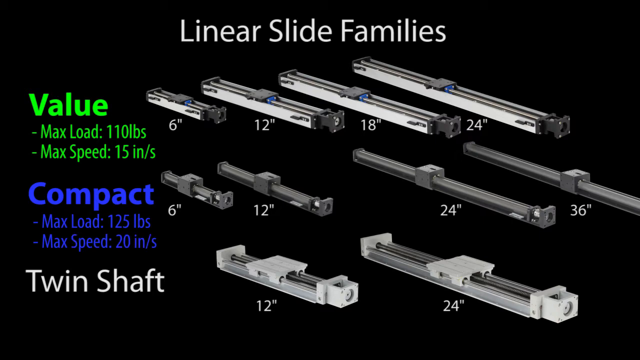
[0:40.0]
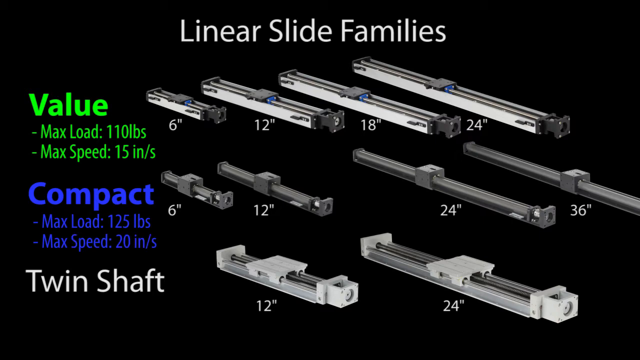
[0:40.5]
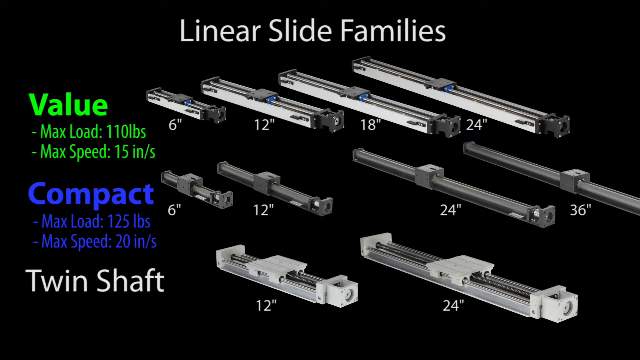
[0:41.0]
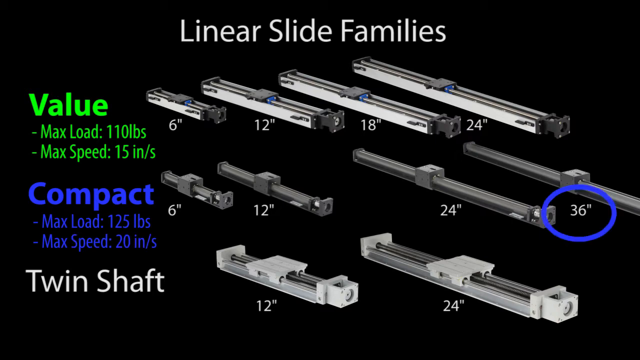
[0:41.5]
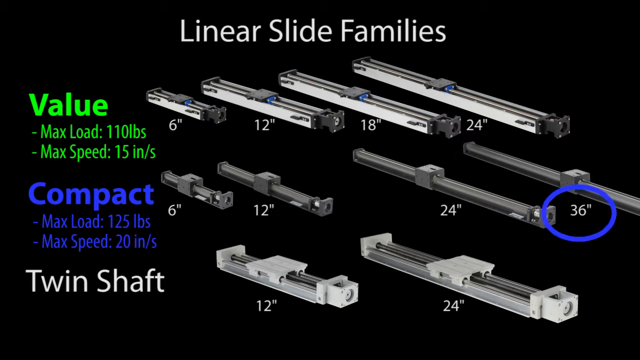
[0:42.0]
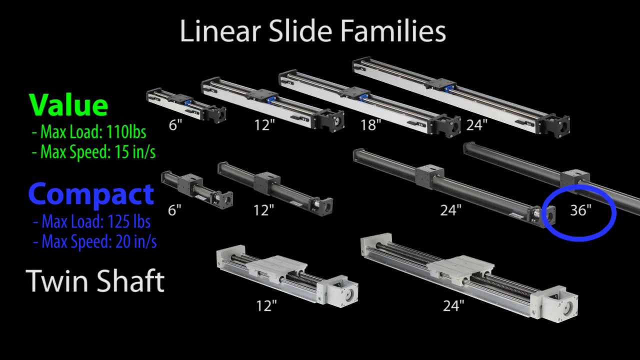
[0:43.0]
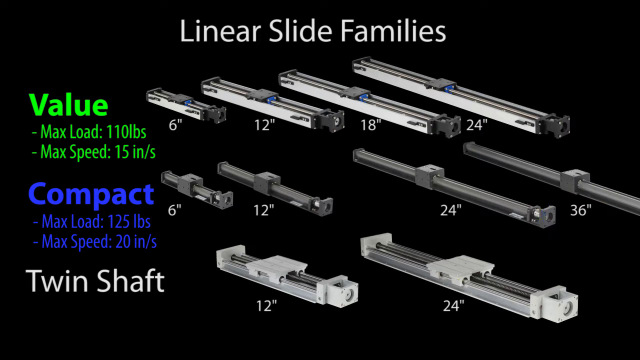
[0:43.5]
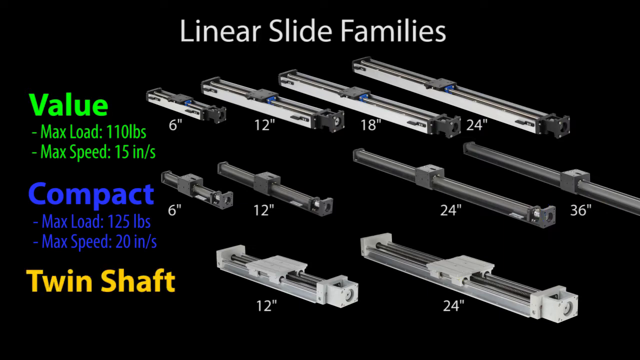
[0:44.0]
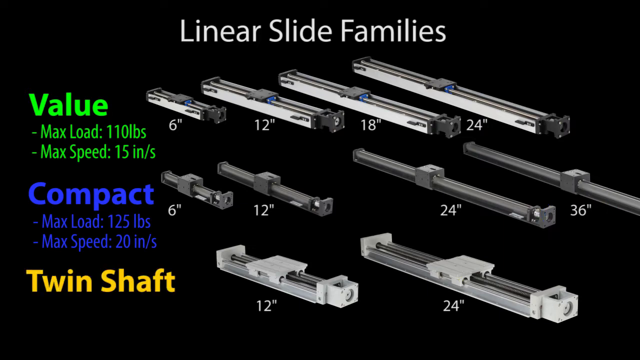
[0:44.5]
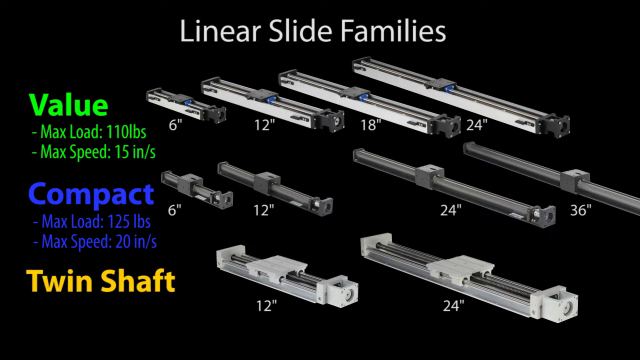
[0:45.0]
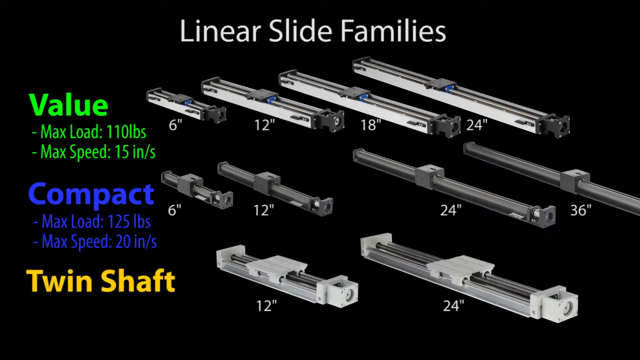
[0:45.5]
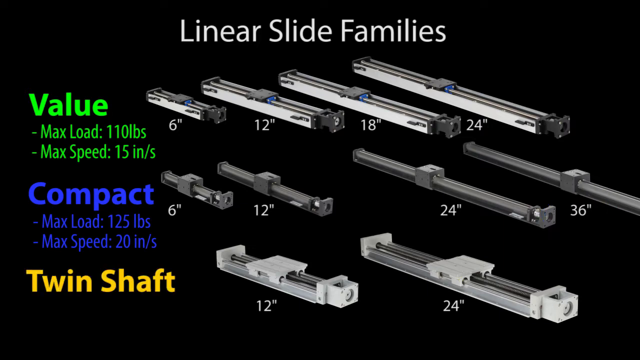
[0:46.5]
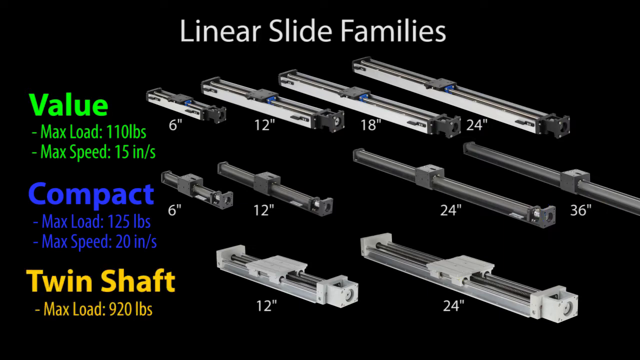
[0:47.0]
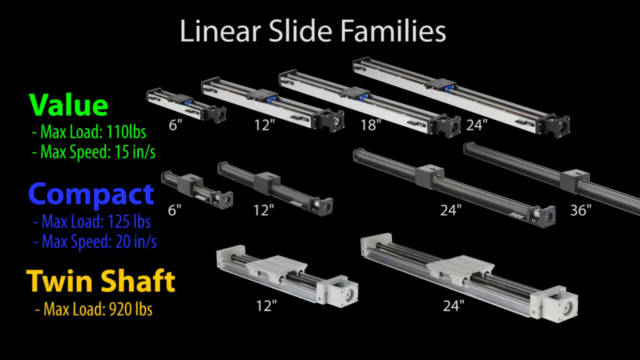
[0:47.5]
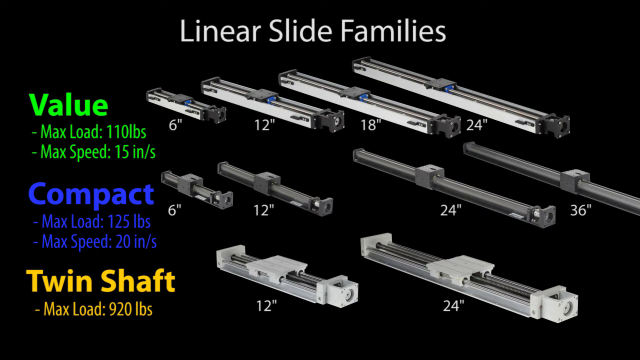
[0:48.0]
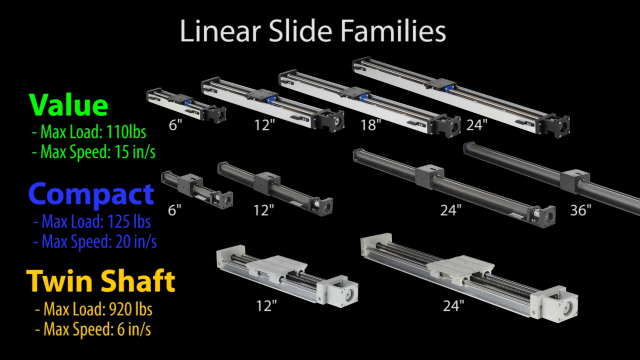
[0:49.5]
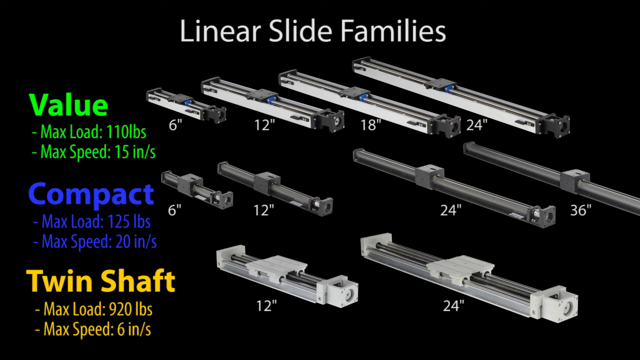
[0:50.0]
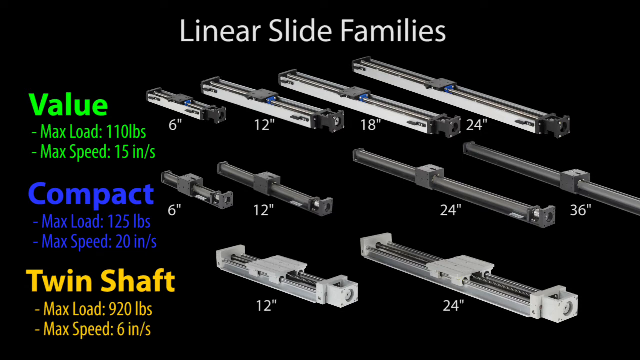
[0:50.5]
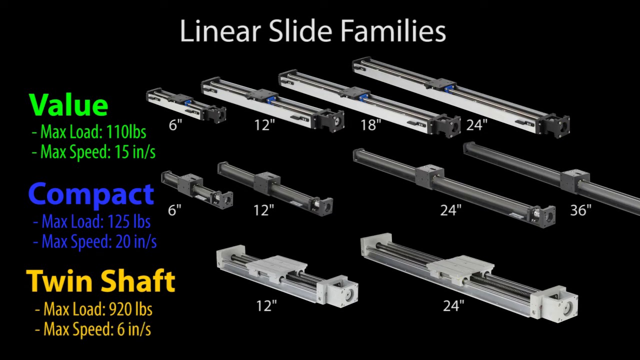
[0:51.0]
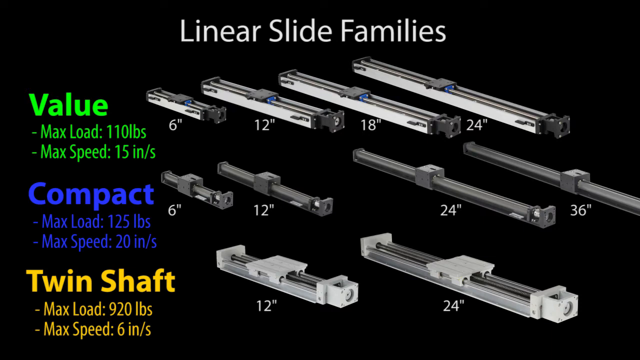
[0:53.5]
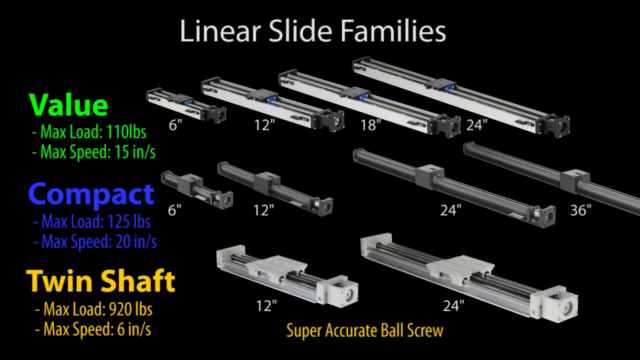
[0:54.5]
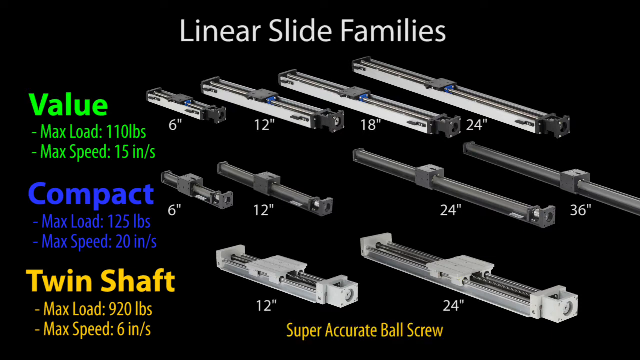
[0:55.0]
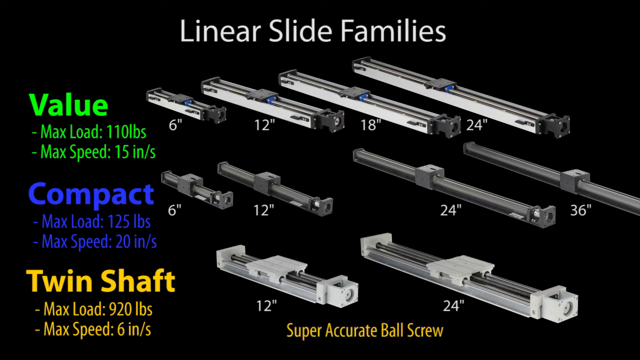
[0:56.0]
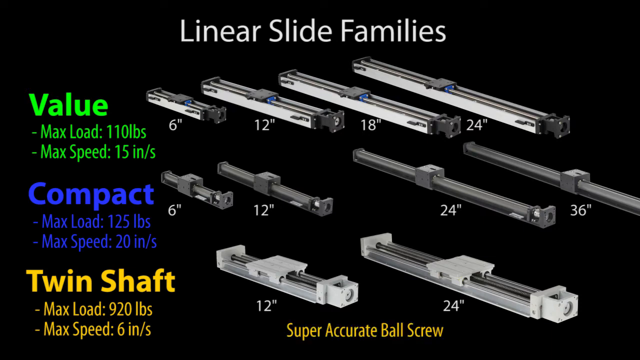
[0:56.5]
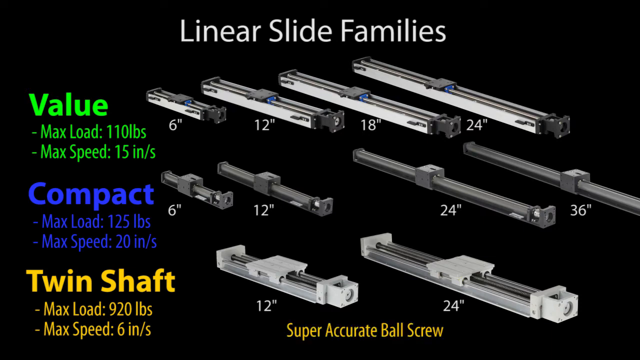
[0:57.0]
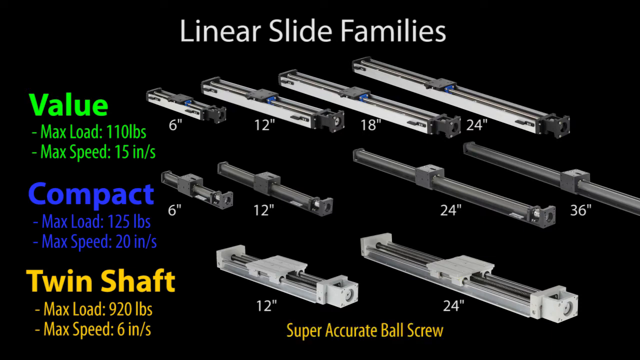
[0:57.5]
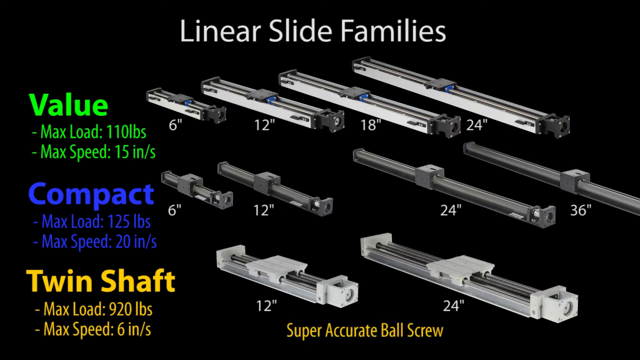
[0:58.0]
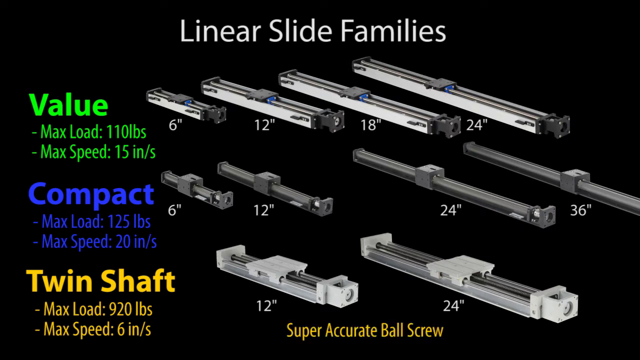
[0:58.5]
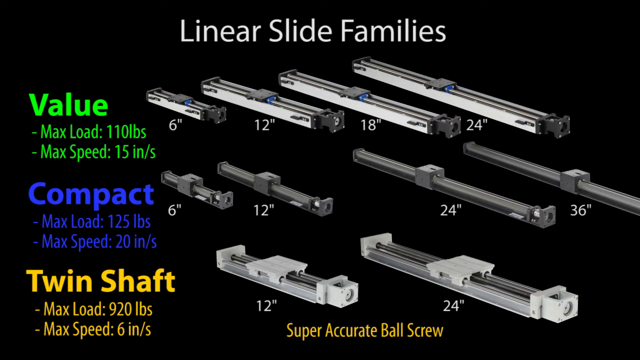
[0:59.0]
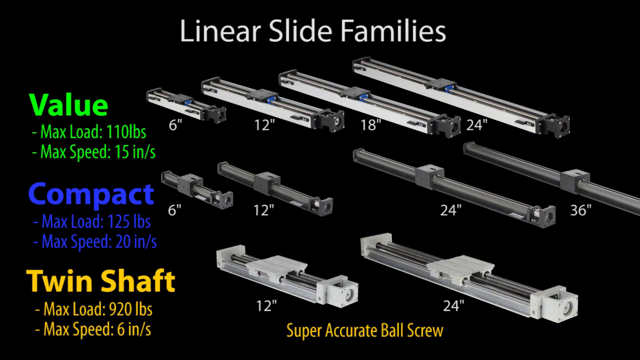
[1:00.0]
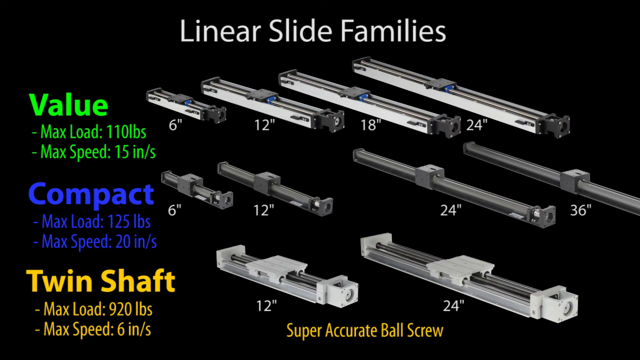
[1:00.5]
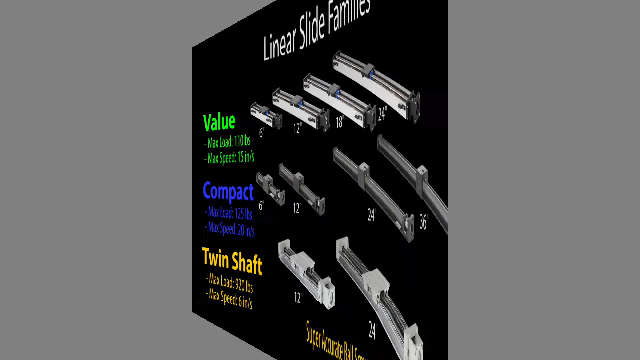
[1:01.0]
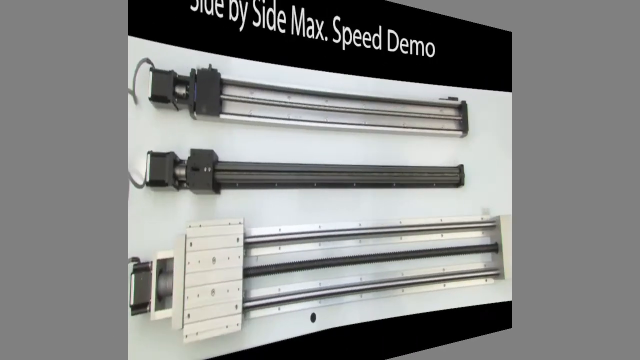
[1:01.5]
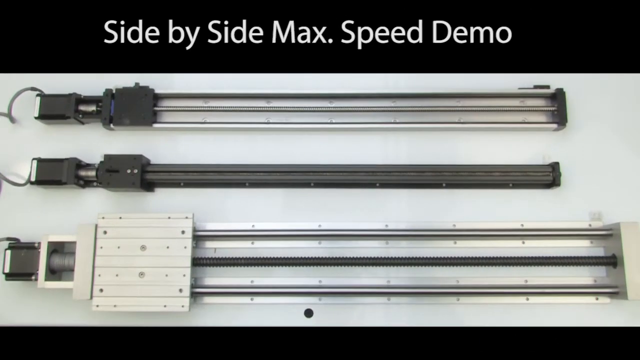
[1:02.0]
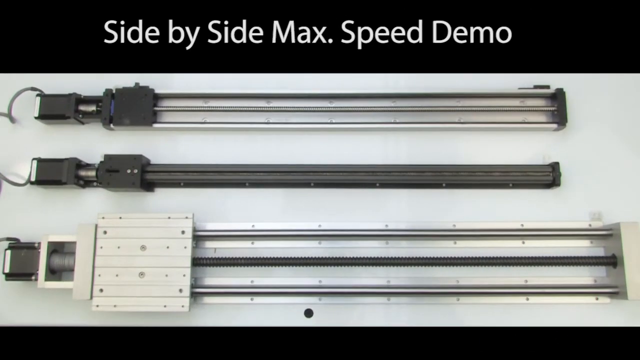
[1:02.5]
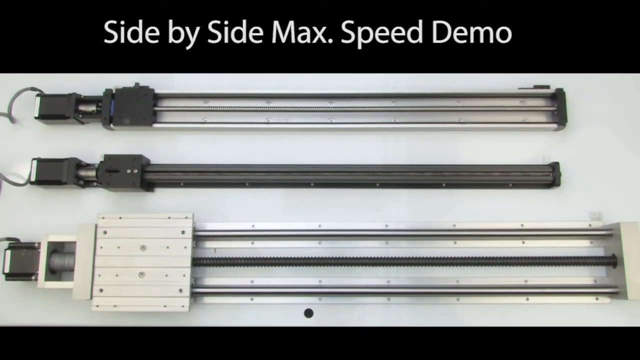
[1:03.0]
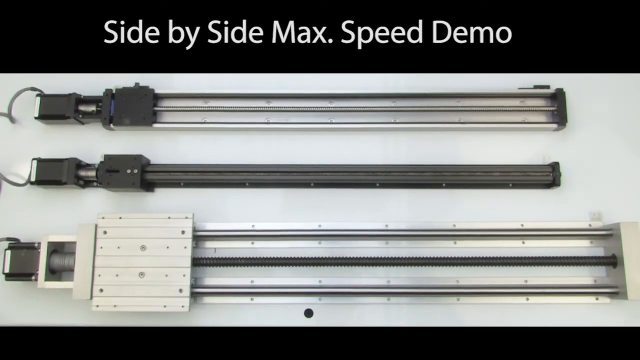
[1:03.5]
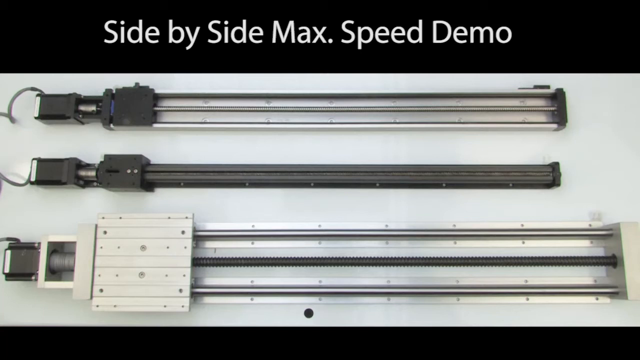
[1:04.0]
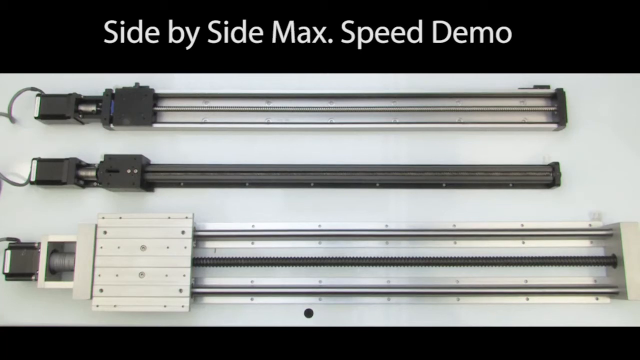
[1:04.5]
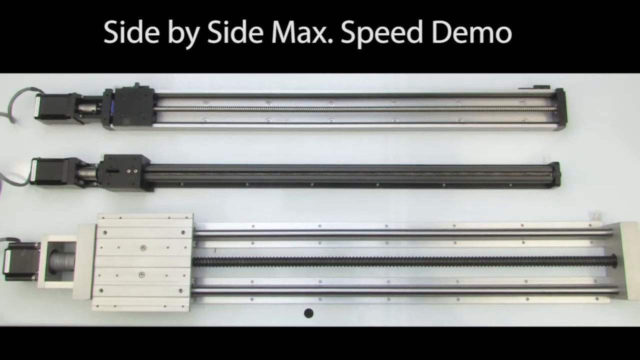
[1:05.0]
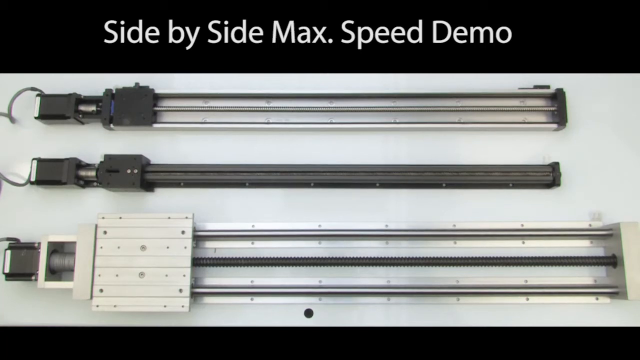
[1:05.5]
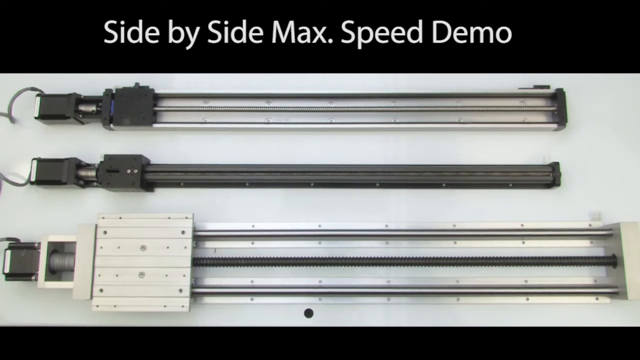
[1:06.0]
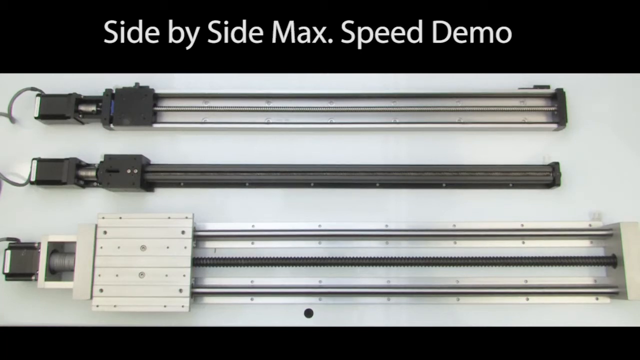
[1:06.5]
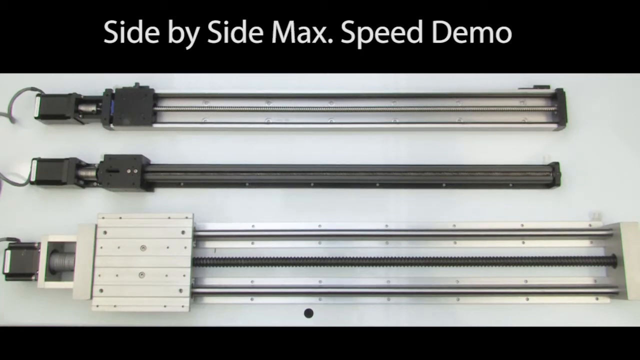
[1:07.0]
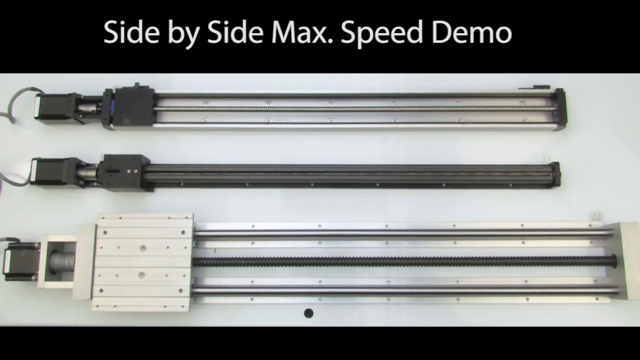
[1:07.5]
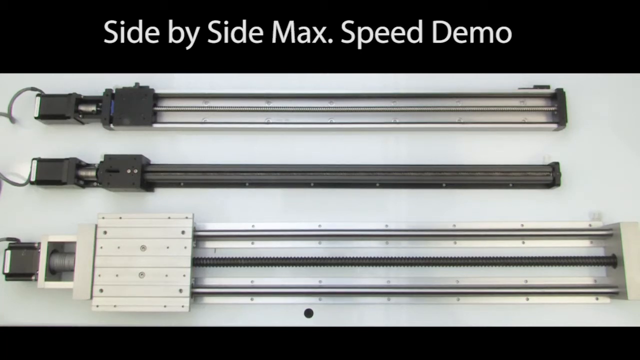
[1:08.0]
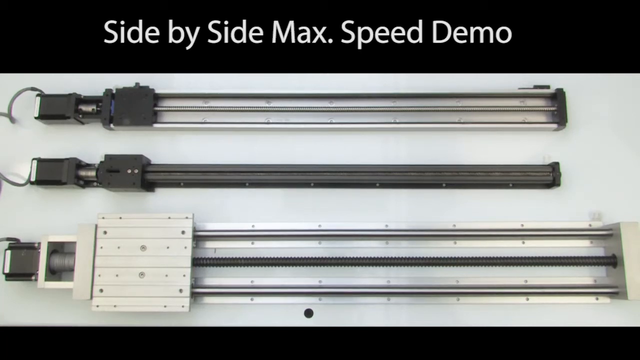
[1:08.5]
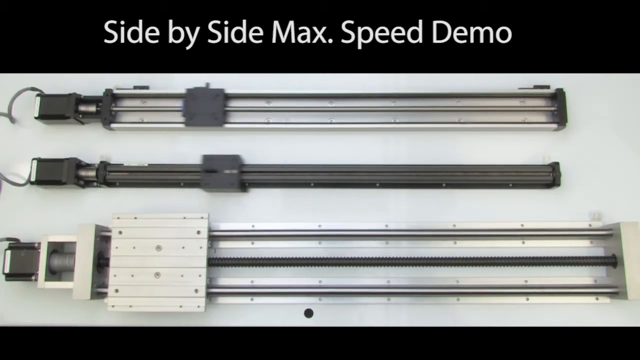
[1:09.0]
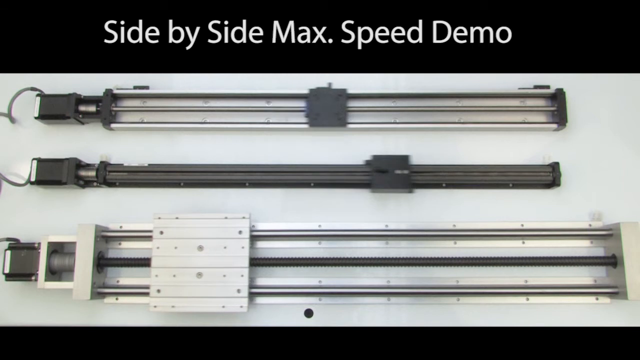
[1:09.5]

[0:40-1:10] A series of linear slides is shown in categories including twin shaft, compact and value, each listed with its max load and max speed. The slides are all square and are shown against a black screen.